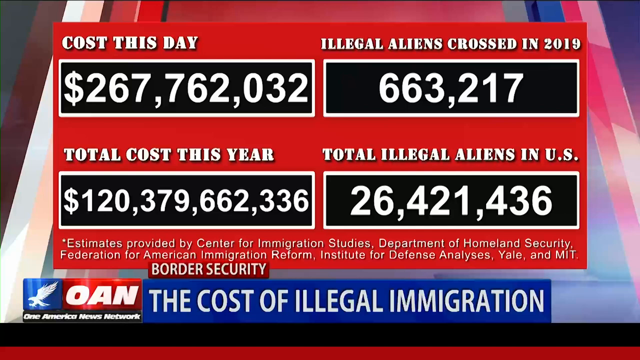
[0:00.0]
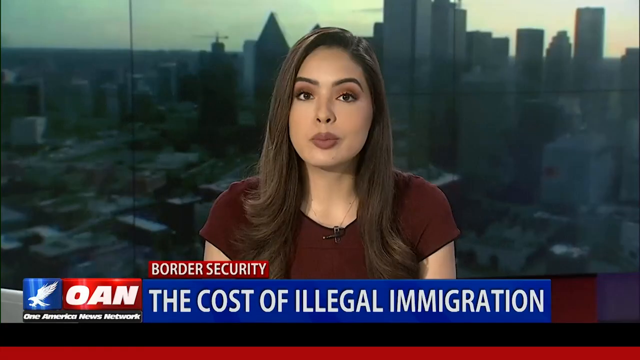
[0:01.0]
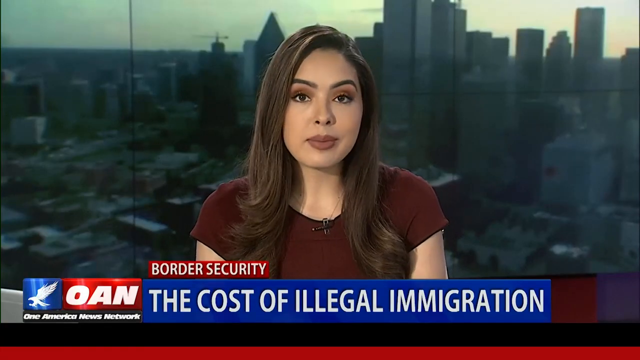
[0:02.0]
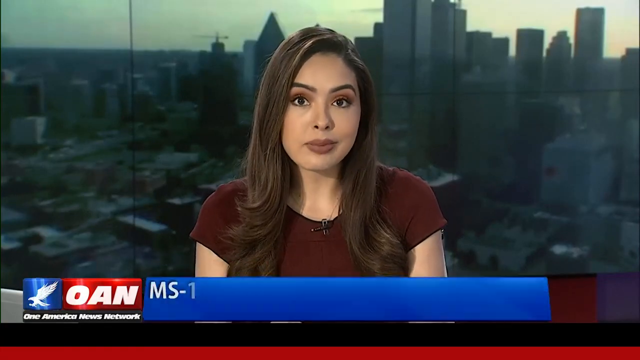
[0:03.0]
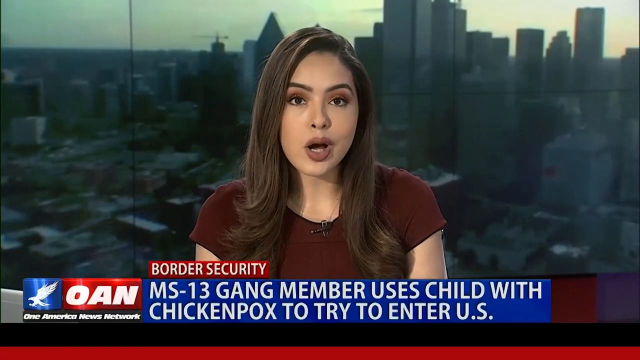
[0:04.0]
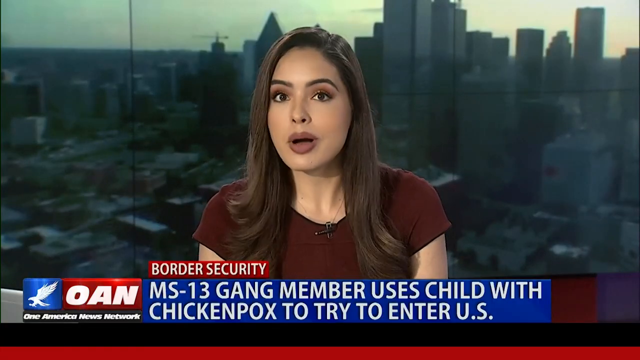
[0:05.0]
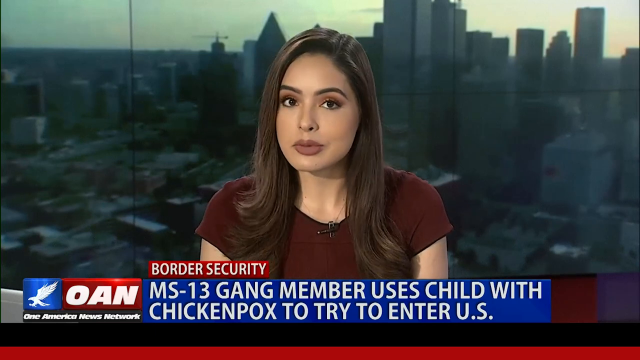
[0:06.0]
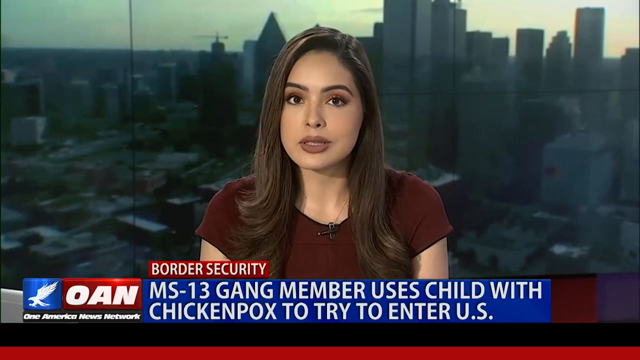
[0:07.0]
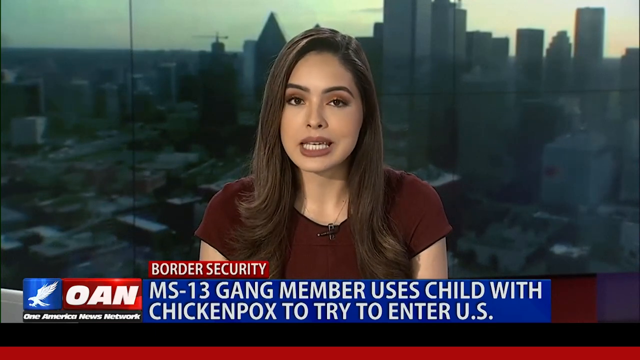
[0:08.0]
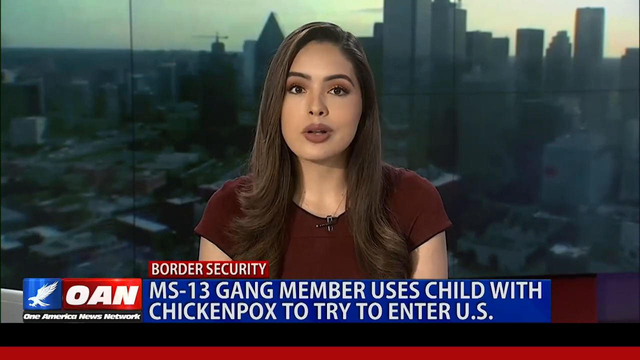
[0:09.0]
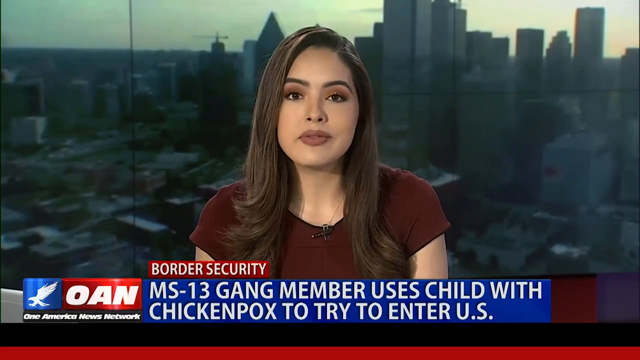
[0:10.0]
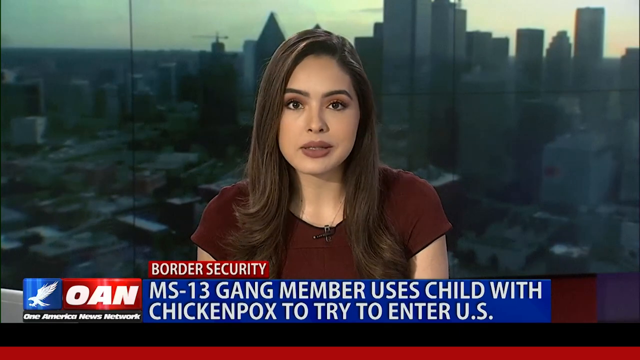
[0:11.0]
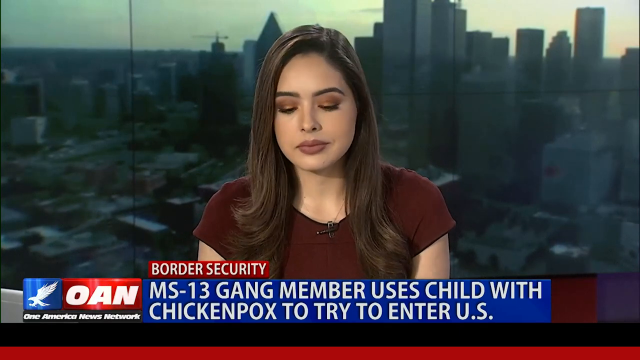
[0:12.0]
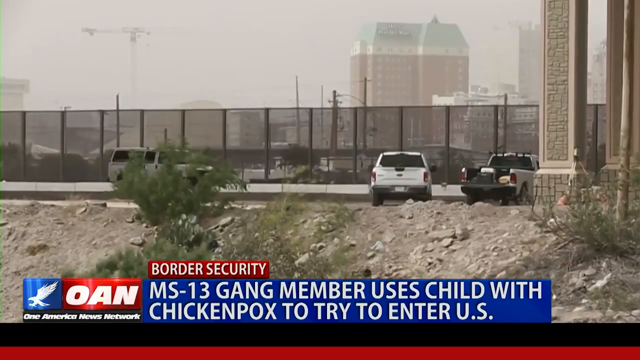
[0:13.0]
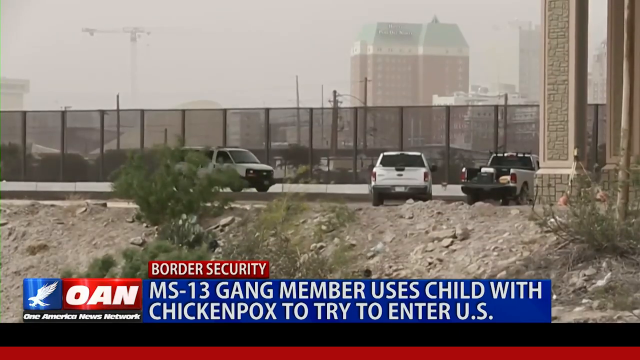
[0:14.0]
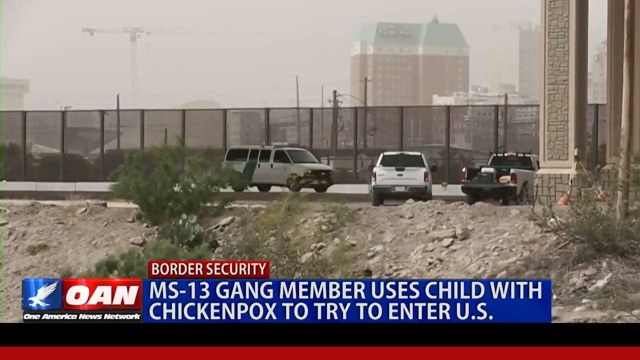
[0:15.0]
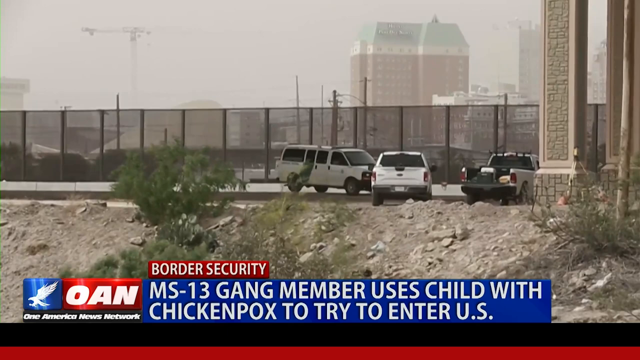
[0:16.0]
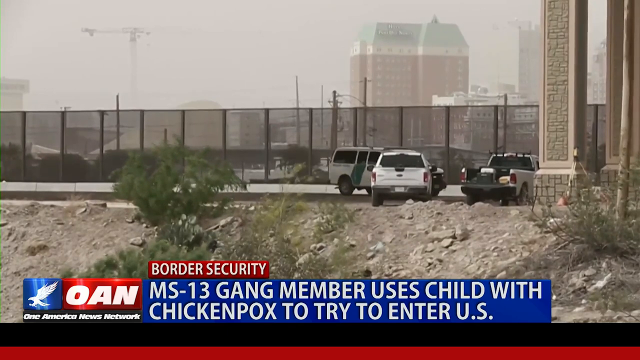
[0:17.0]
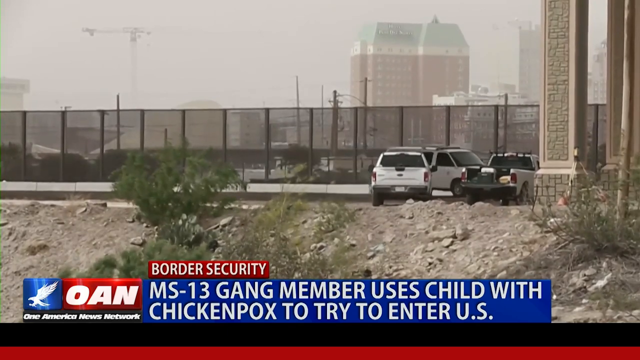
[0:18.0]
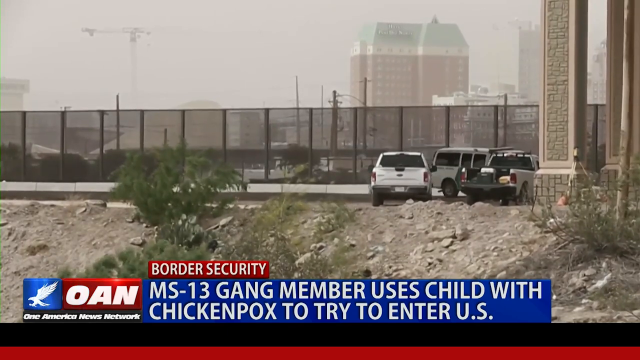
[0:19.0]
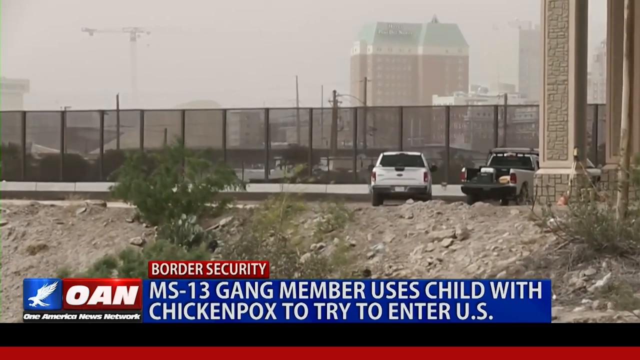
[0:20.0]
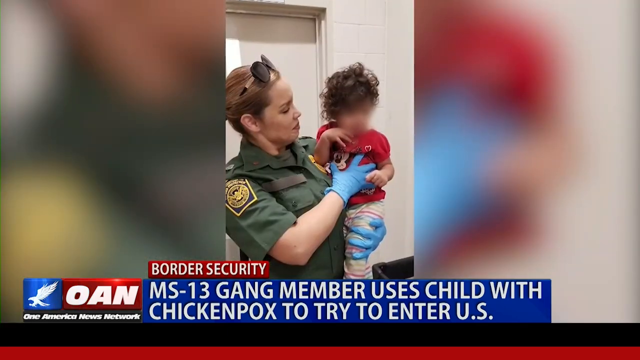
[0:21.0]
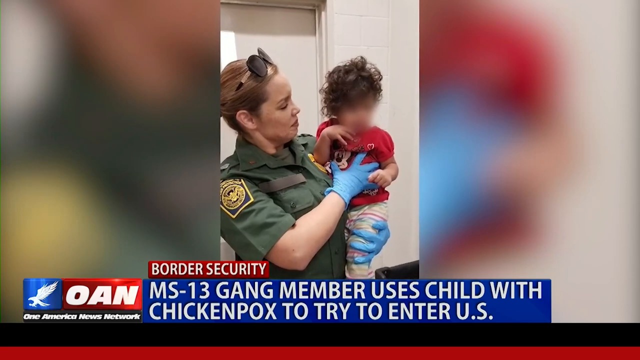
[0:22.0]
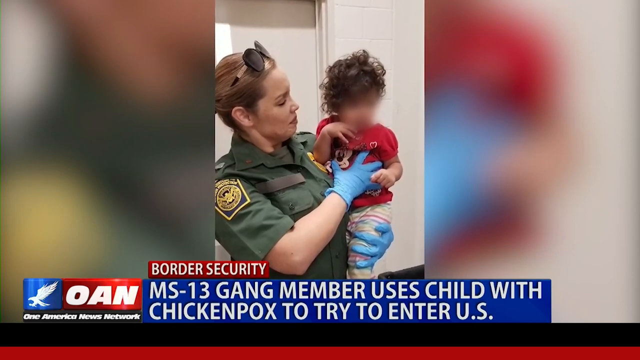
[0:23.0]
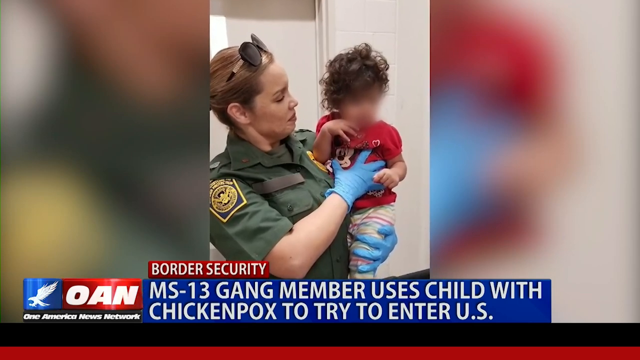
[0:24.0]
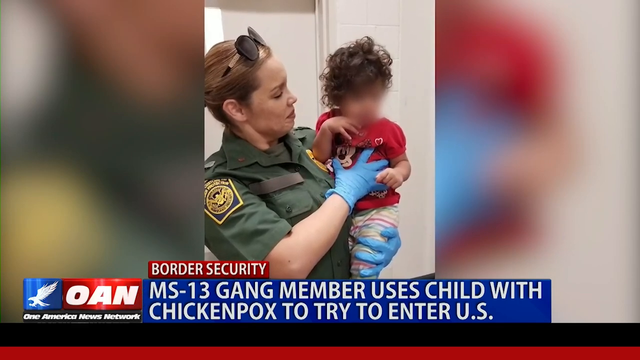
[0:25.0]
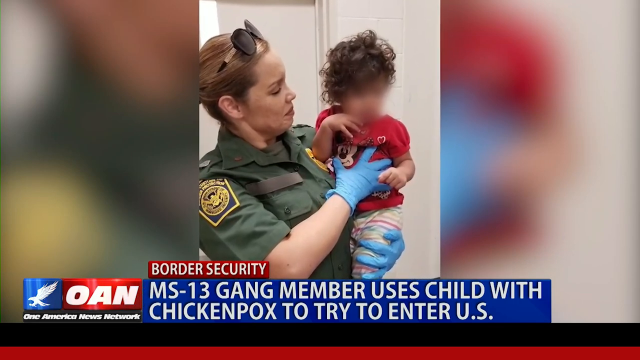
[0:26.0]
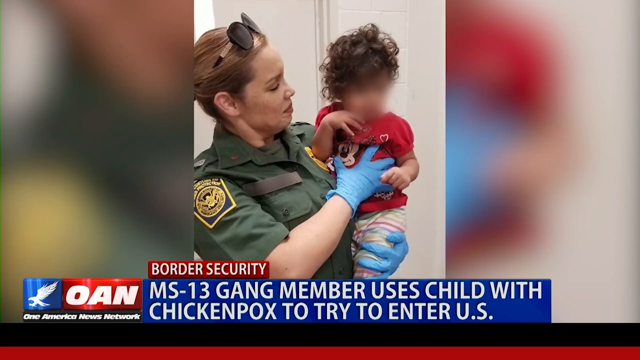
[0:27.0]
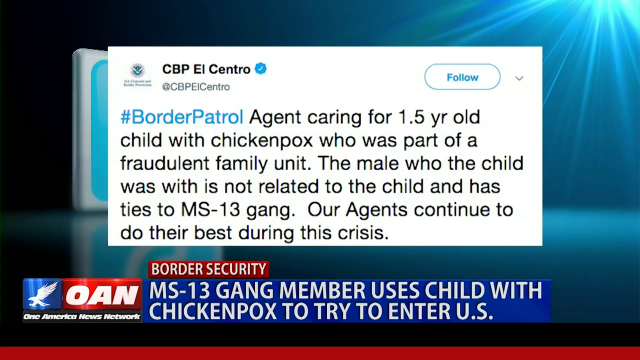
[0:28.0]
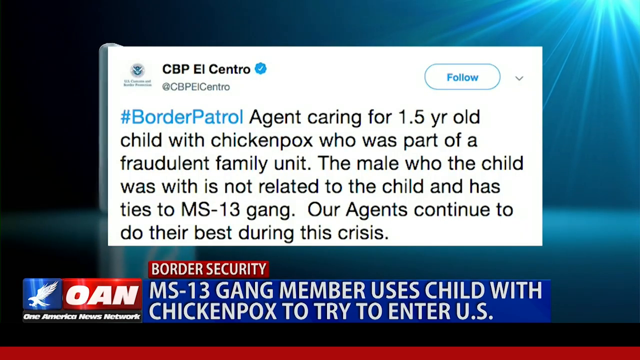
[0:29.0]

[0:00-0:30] What looks like an OAN news segment shows a figure for the cost of illegal immigration of 267 million plus. A woman with long, styled brown hair, probably around 30 years old, appears, apparently in a newsroom, with a city in the background that is probably superimposed. Across the bottom of the screen runs the text "ms 13 gang member uses child with chicken pox to try to enter us". The video cuts from the woman to the border on a very hazy day, where a female border patrol officer wearing gloves holds a little baby with curly brown hair and a little red shirt. A CBP post, possibly from Twitter, is shown, and border security is shown.